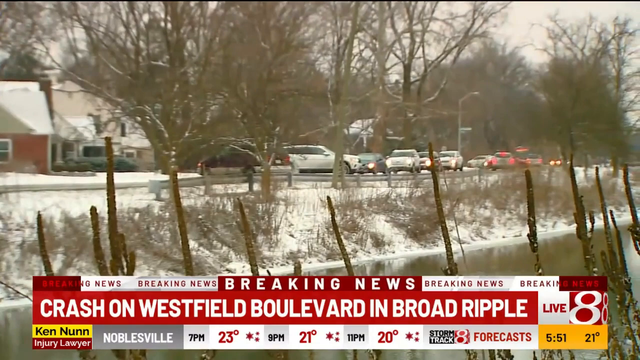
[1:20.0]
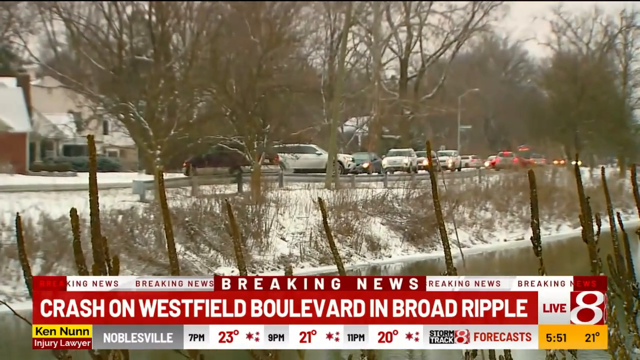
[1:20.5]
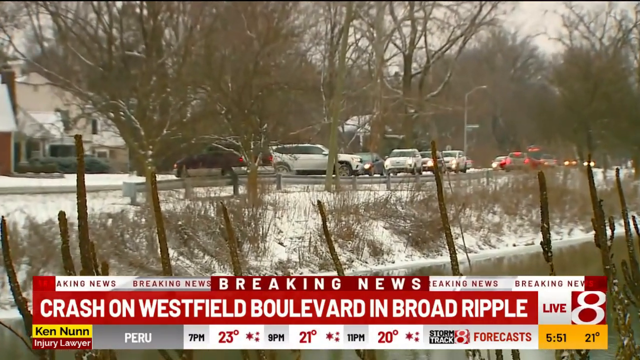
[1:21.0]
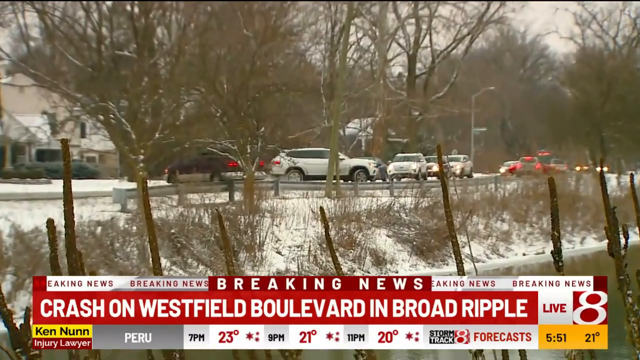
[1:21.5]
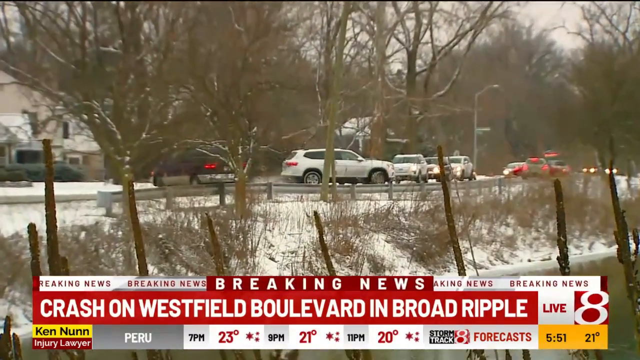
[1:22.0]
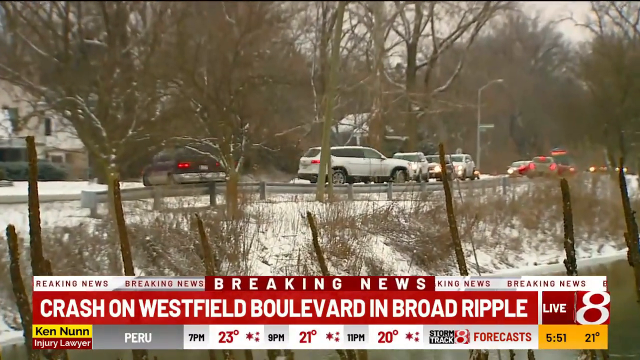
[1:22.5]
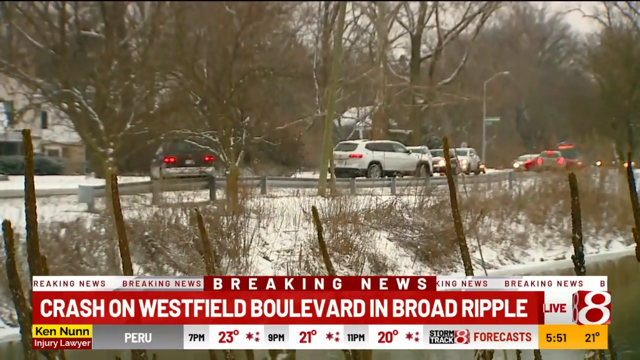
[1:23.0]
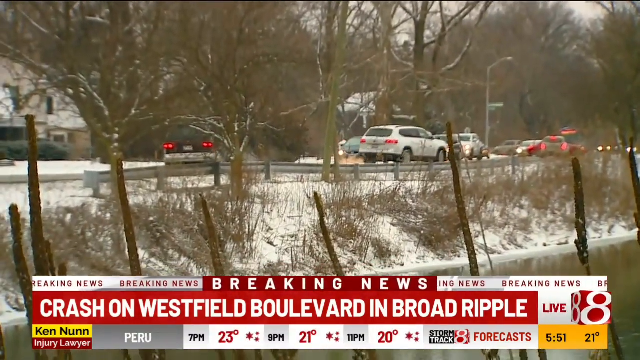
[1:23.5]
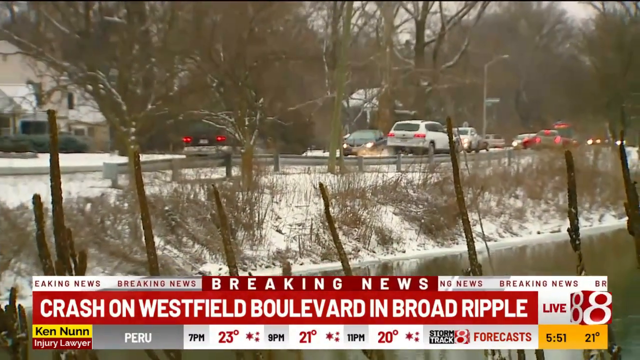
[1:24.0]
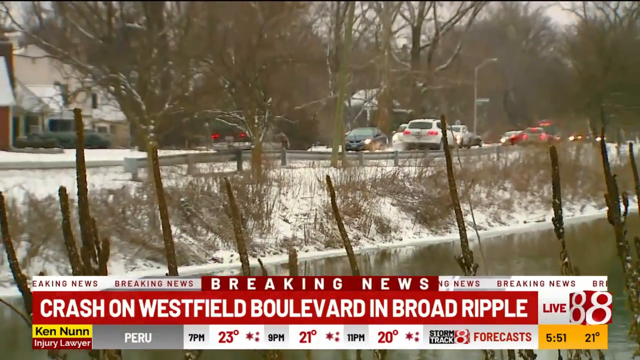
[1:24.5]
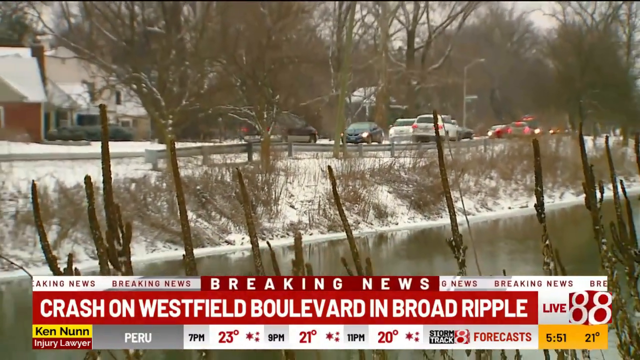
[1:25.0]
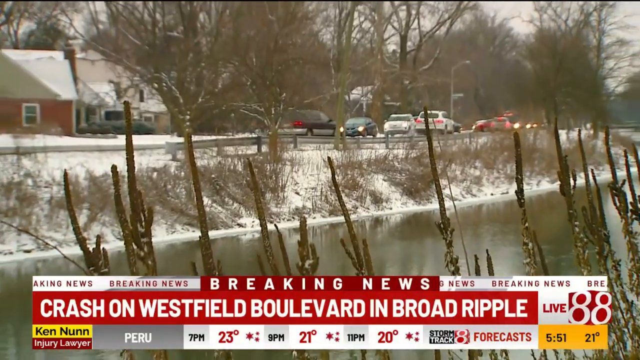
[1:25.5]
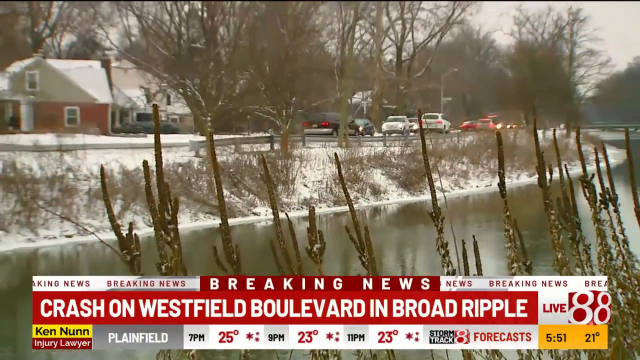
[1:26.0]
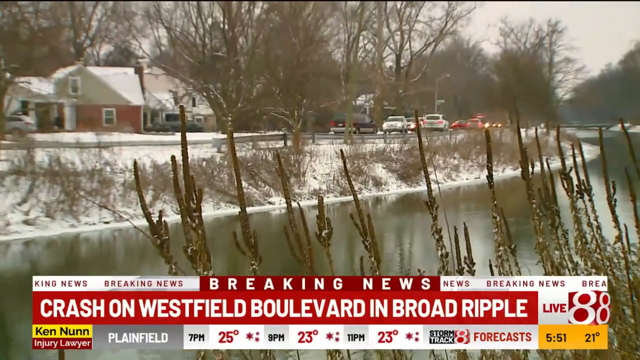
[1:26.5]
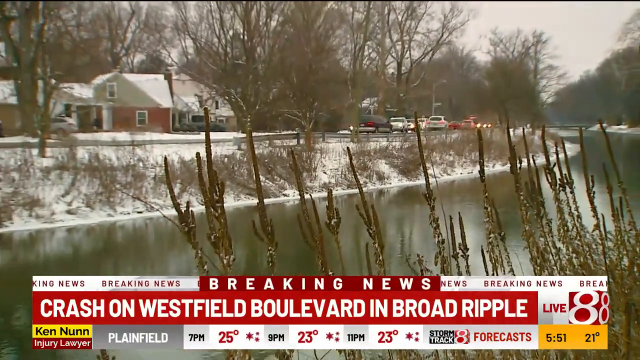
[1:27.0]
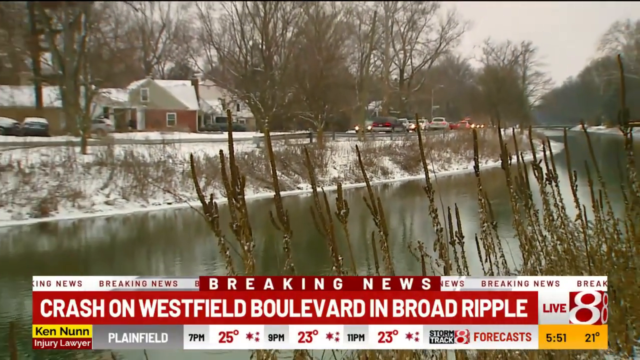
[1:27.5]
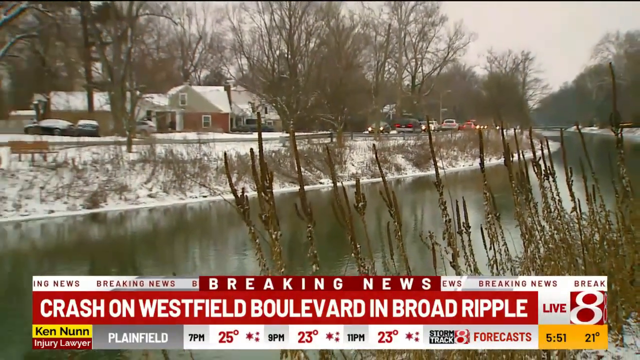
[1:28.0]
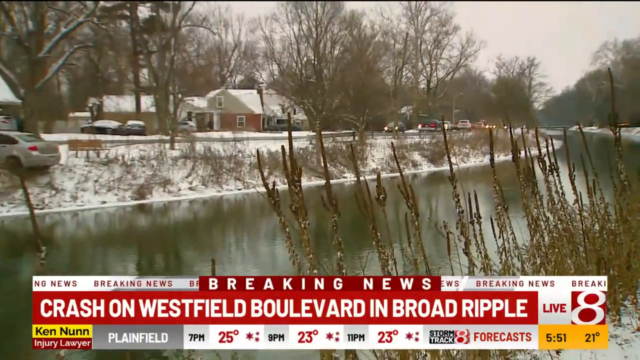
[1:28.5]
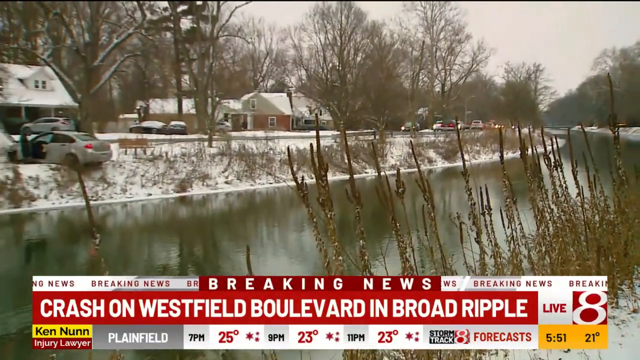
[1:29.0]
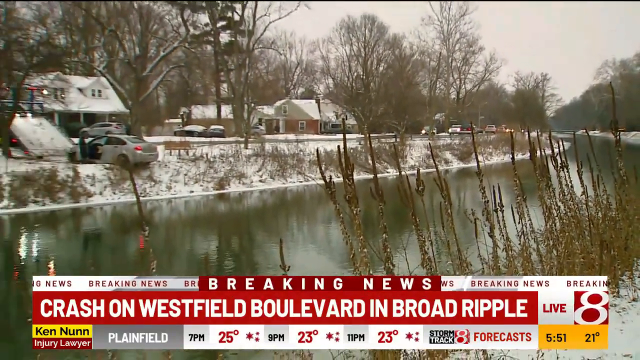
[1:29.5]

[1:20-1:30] The breaking news story about a crash on Westfield Boulevard in Broad Ripple continues as live reporting on channel 8. At the scene of the crash there is a river, snow on the ground and cars on a highway; three cars are being held up and some are turning around. The shot cuts back to the overview of the scene, where a silver-looking car that has been involved in an accident is in a precarious position. Information at the bottom of the screen shows the temperature forecast for various towns in the surrounding areas.